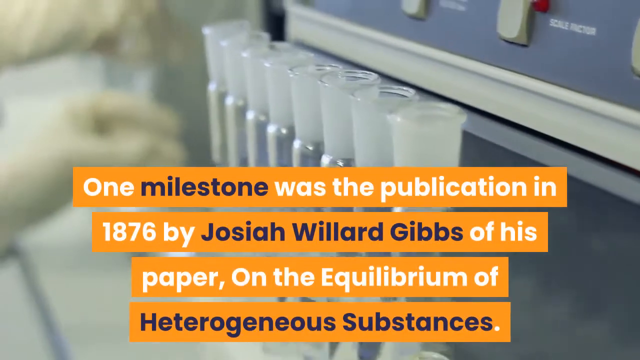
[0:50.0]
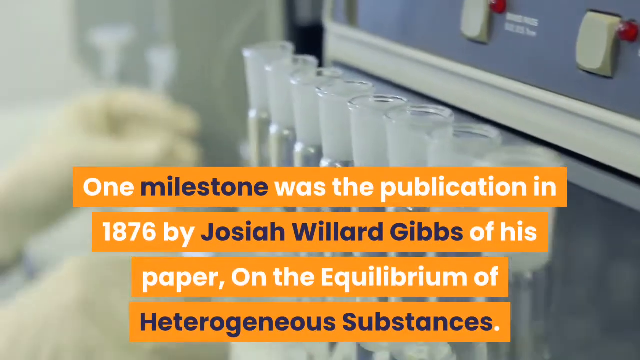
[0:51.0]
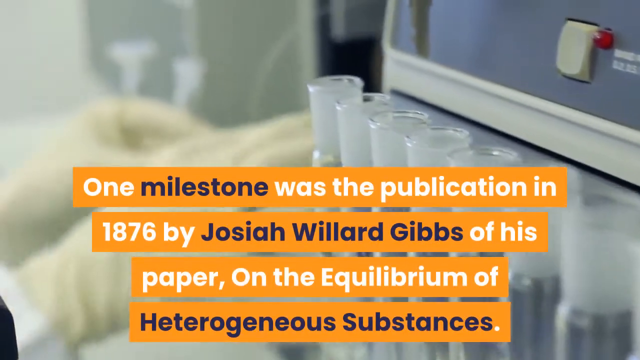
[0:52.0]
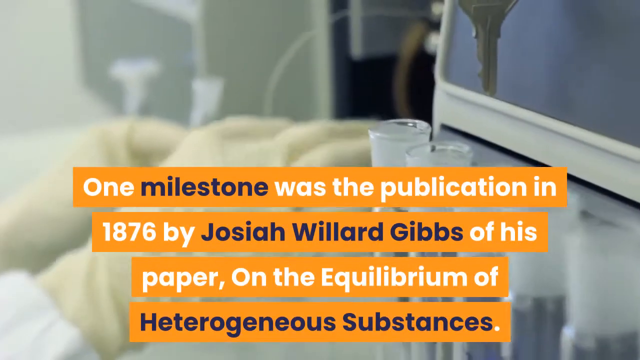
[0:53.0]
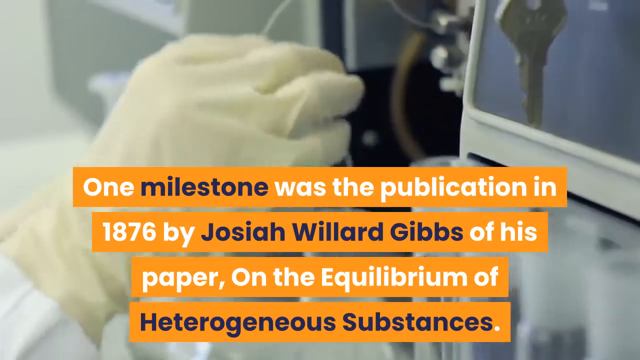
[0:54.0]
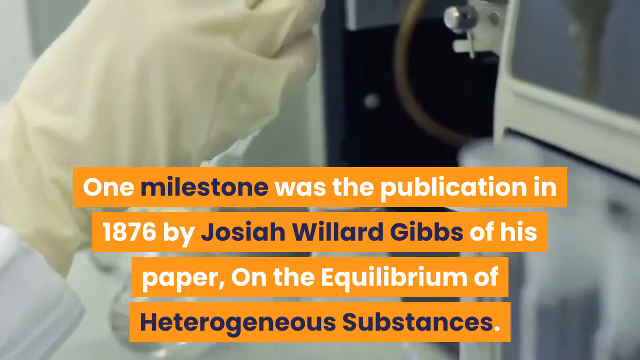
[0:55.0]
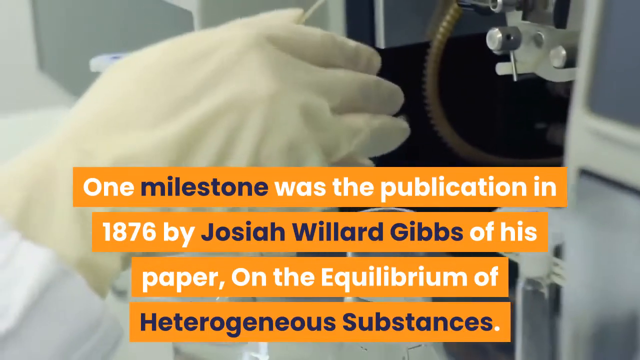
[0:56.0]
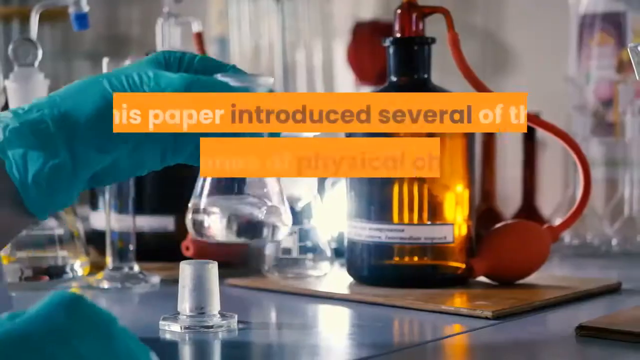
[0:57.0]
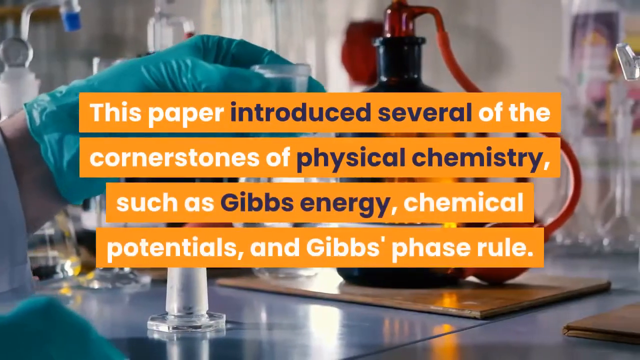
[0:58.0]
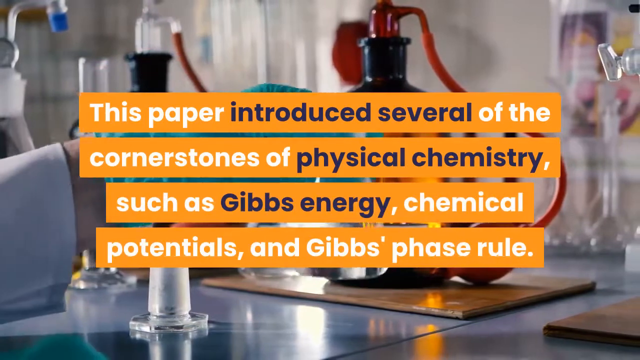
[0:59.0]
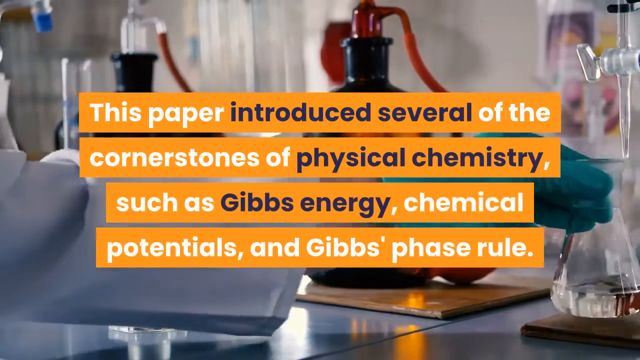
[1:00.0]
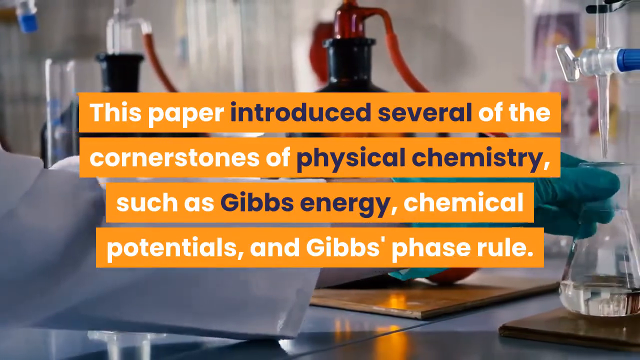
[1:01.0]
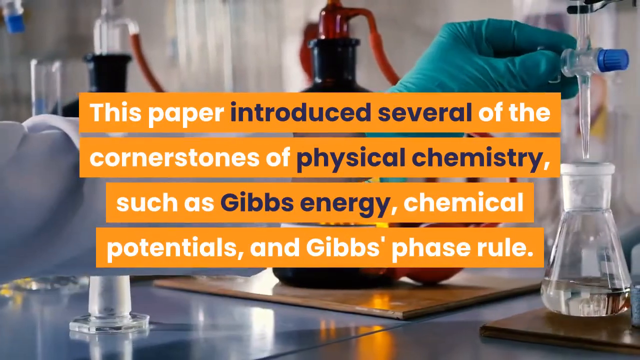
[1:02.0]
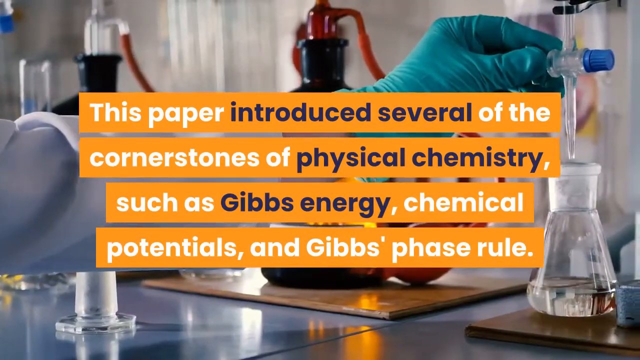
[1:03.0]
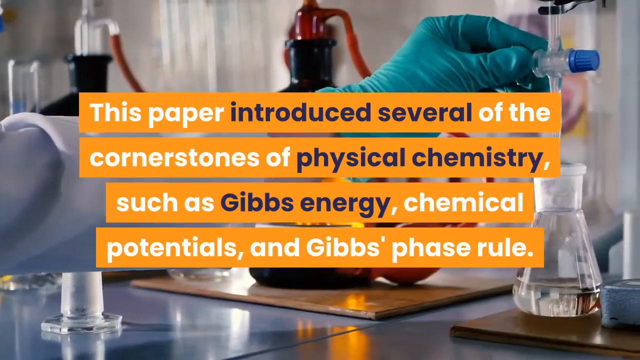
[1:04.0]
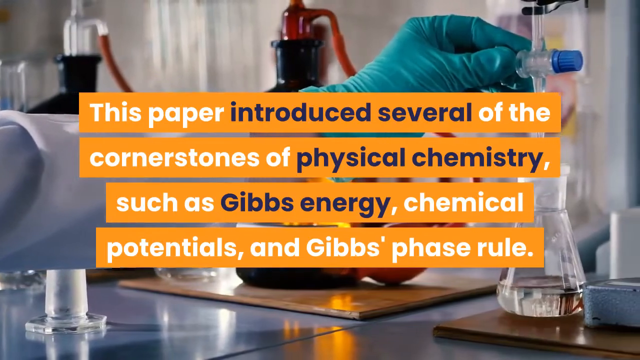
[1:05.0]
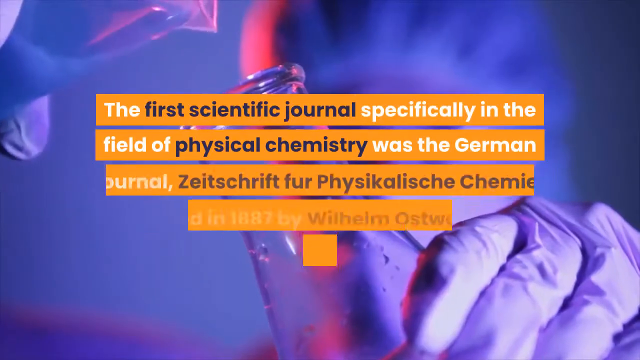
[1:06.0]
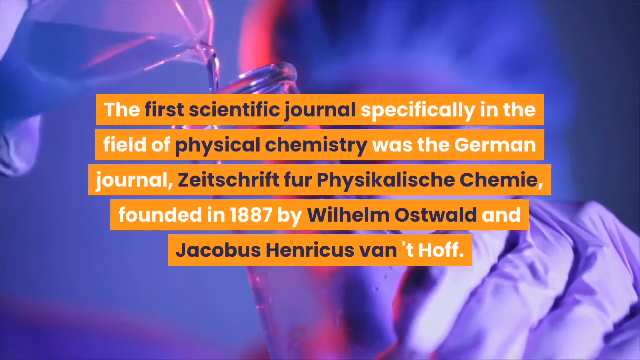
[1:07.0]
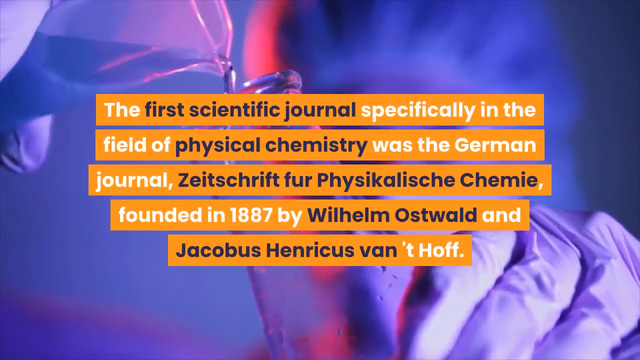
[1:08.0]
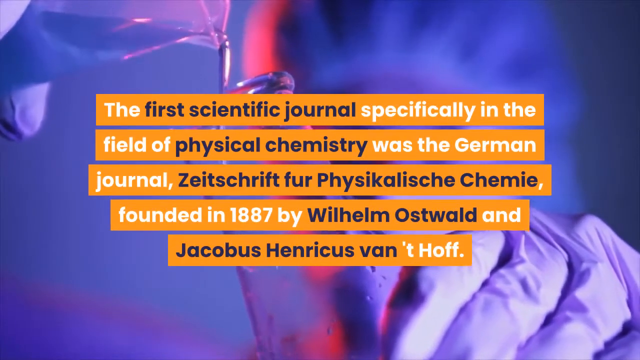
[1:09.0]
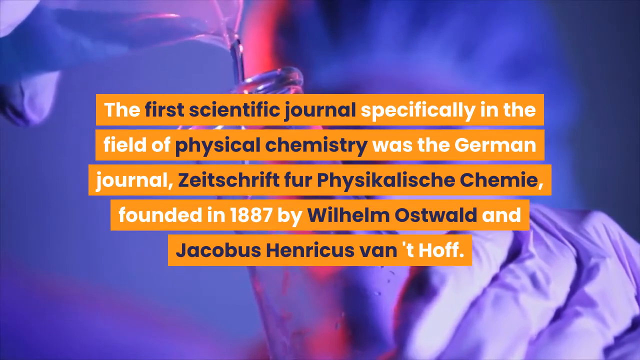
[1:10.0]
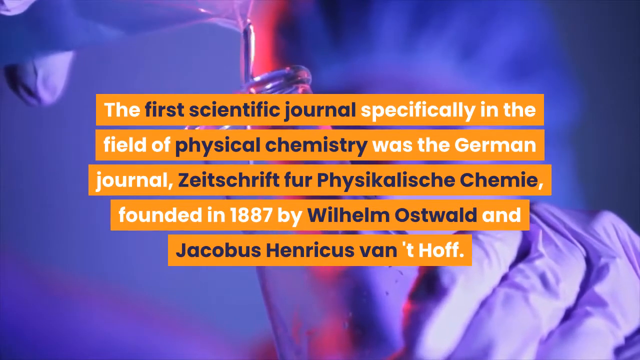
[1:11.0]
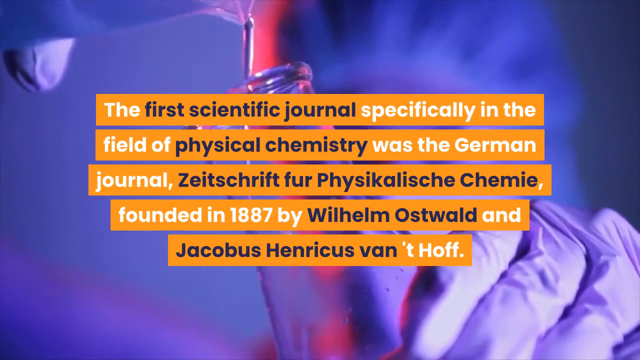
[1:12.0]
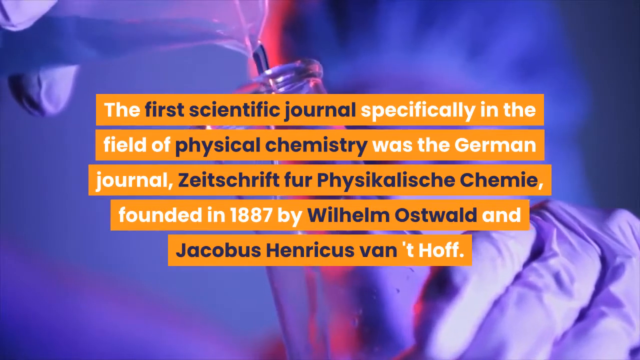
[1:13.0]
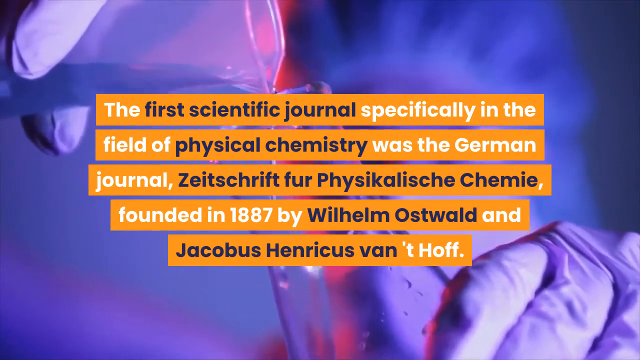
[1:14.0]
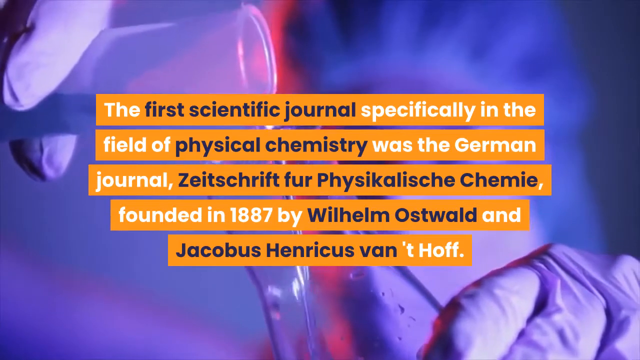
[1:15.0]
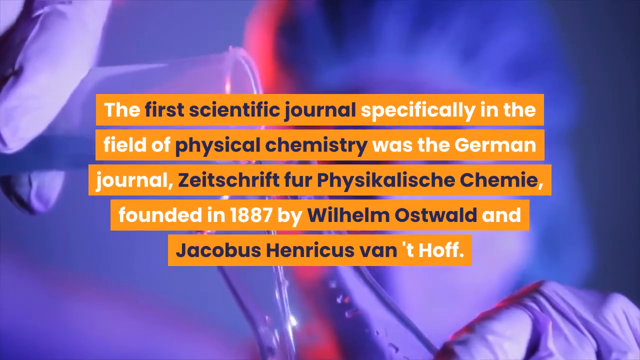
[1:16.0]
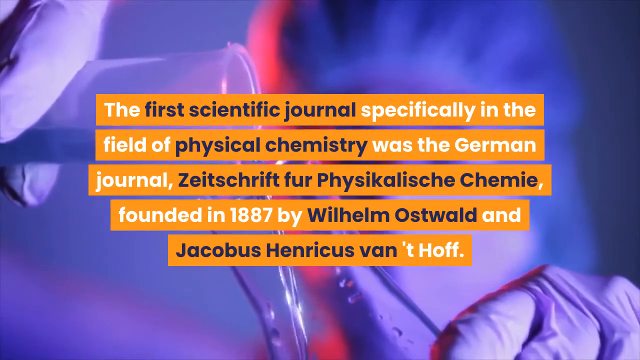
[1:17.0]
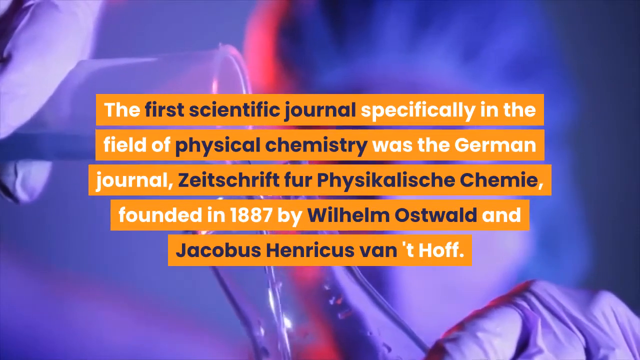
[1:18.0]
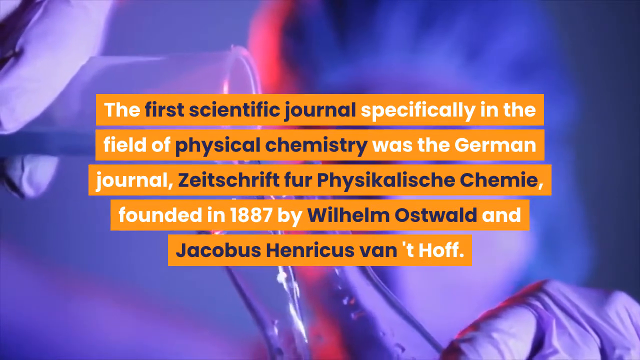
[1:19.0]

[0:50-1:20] A caption appears over footage of a person inserting glass beakers into a machine. The caption describes a milestone: the publication by Josiah Willard Gibbs in 1876 of the paper titled "On the Equilibrium of Heterogeneous Substances." The person at the machine and glass vials inserts a small plastic tube into one of the containers. Next, a person swirls the liquid inside a beaker to mix it. The captions describe how the paper introduced several cornerstones of physical chemistry, such as the concept of Gibbs energy, chemical potentials, and Gibbs phase rule. The beaker is set down on the table beside other large glass bottles. A dropper is above the beaker, and a dial is turned so the liquid drips into the beaker.